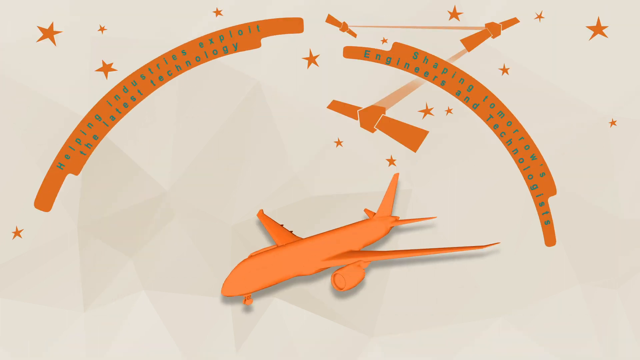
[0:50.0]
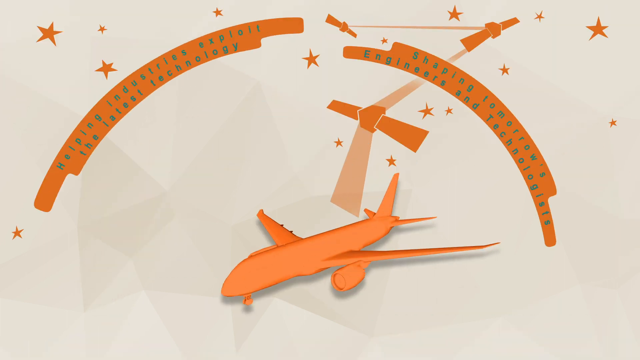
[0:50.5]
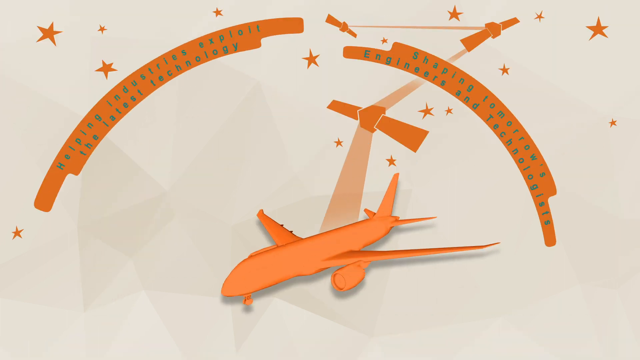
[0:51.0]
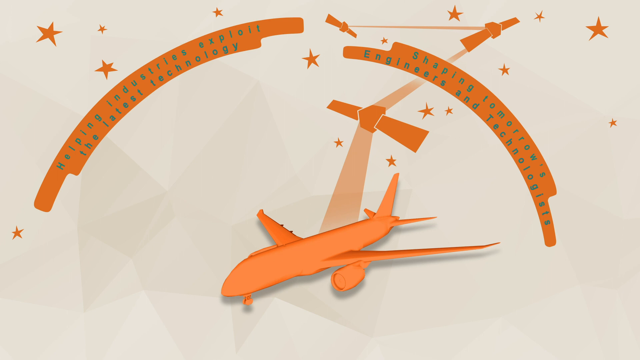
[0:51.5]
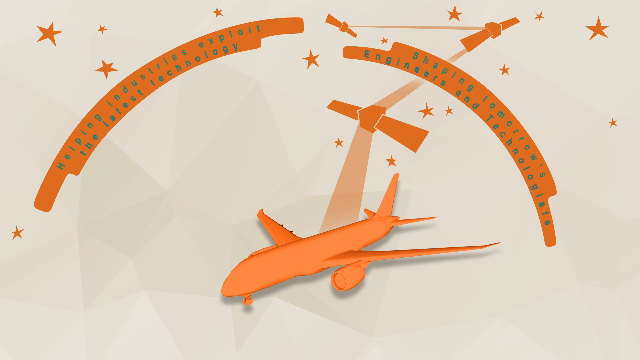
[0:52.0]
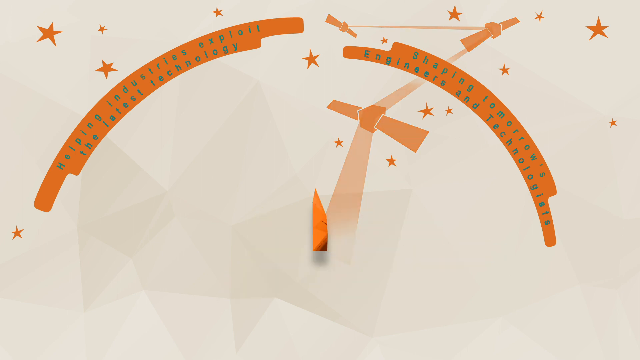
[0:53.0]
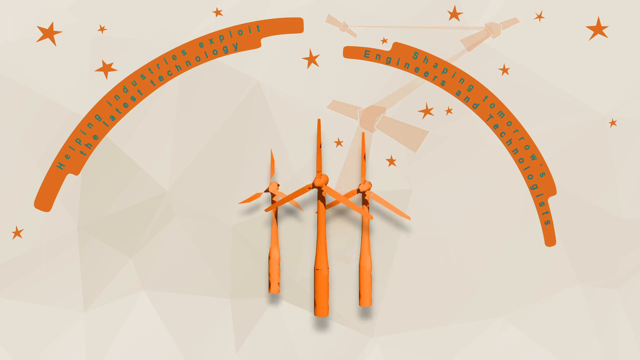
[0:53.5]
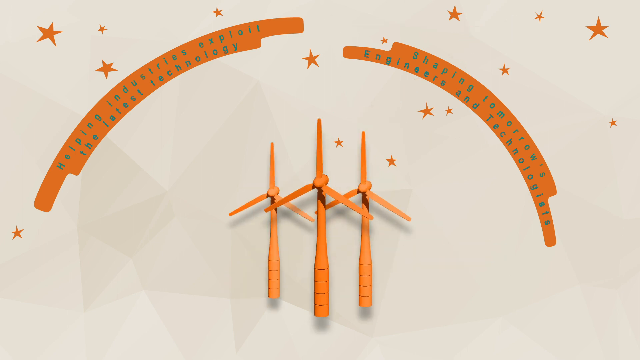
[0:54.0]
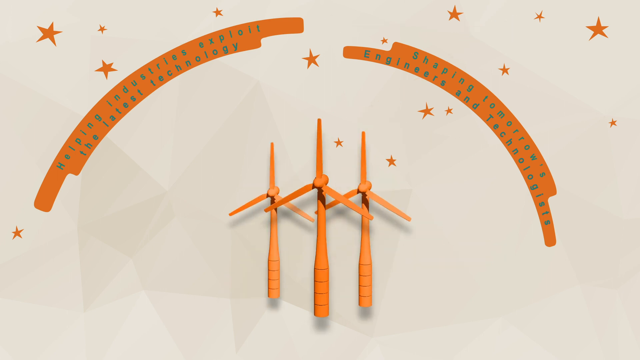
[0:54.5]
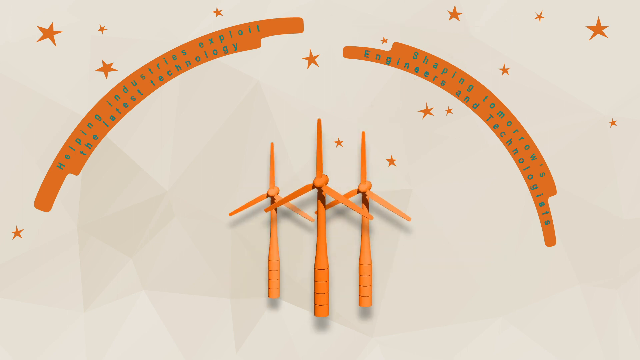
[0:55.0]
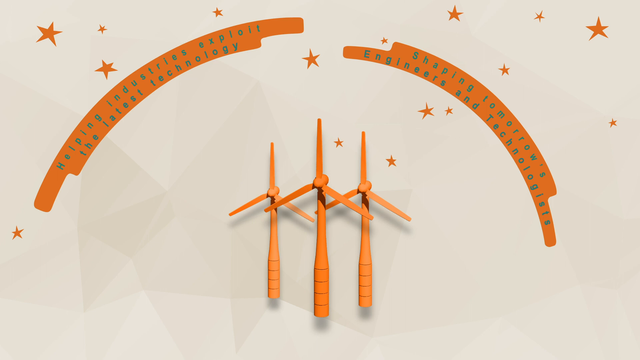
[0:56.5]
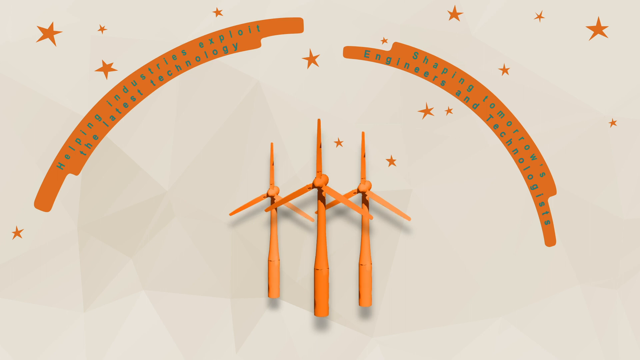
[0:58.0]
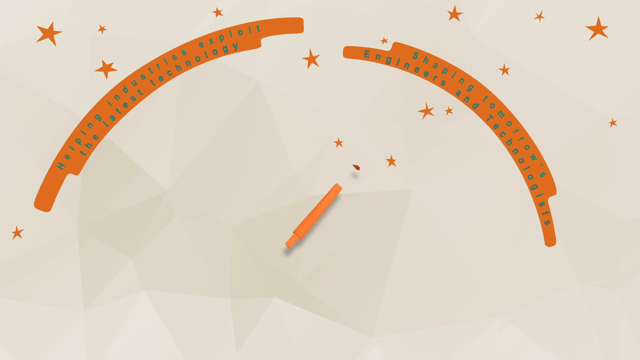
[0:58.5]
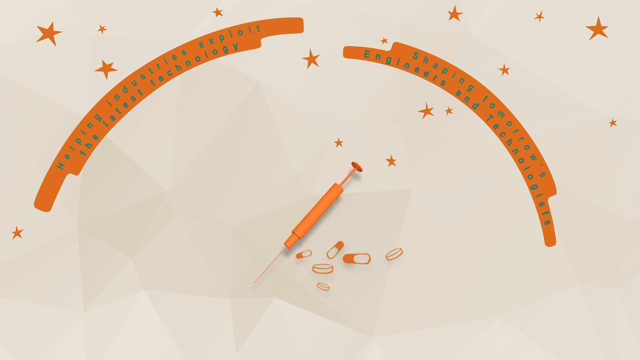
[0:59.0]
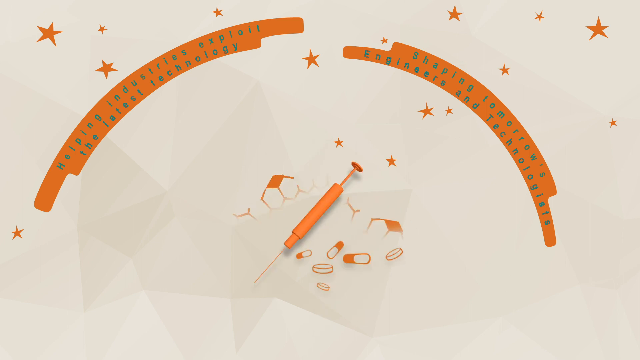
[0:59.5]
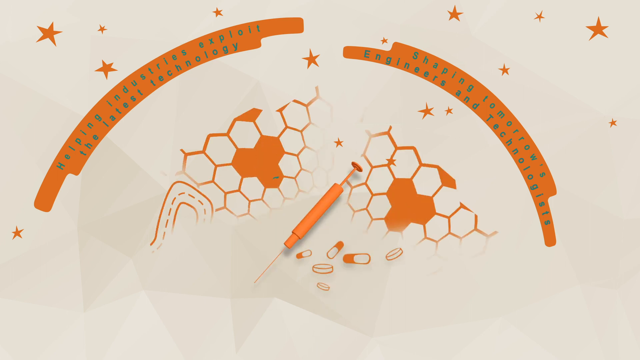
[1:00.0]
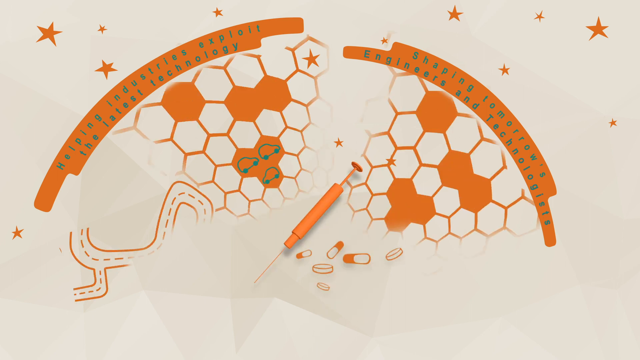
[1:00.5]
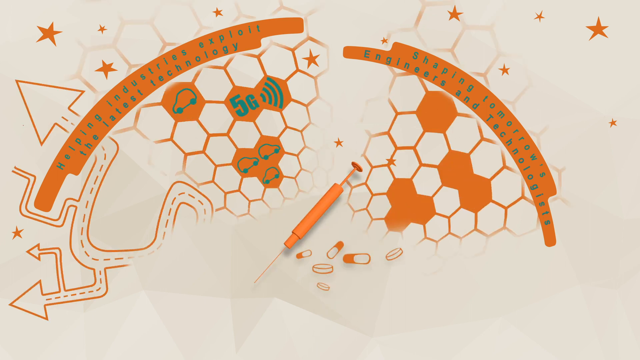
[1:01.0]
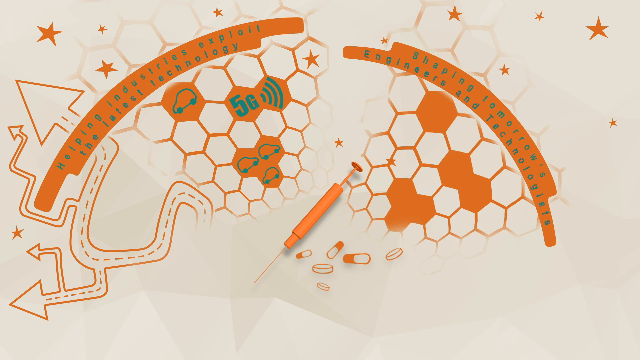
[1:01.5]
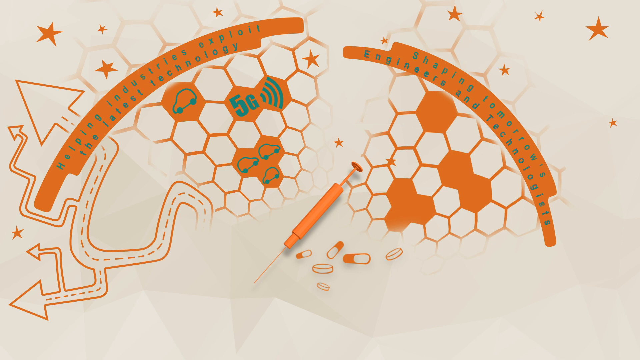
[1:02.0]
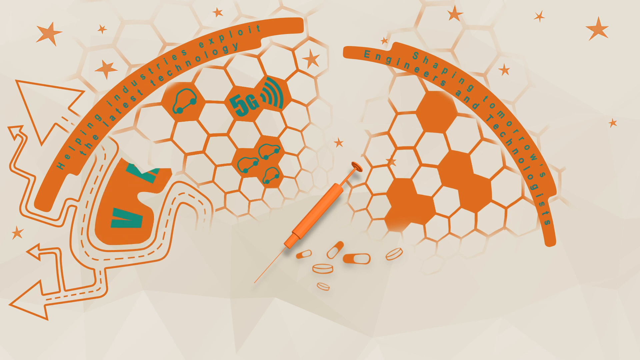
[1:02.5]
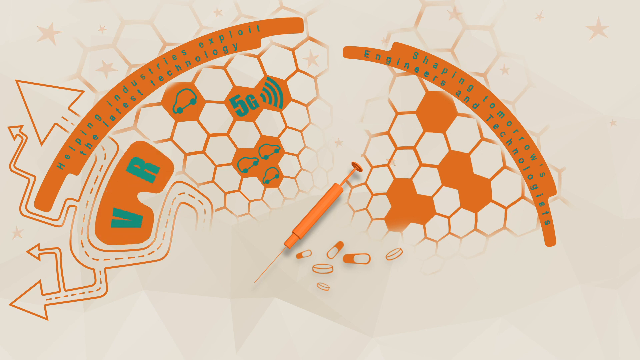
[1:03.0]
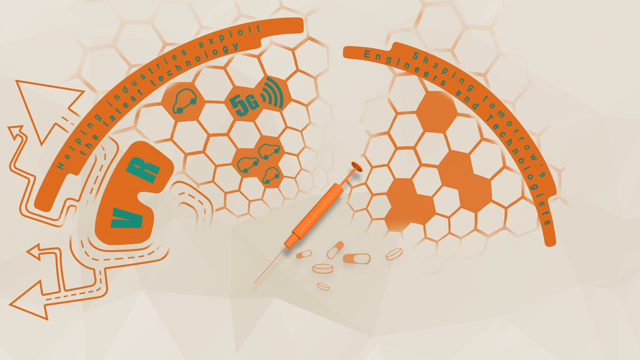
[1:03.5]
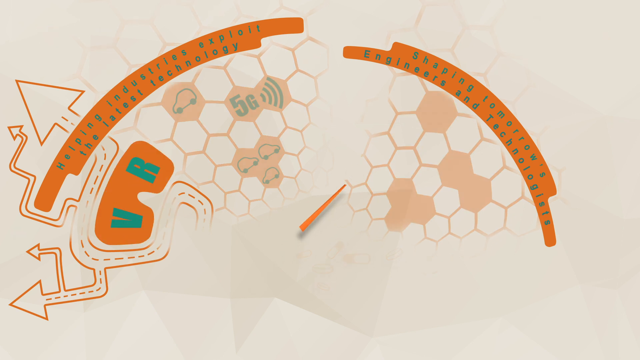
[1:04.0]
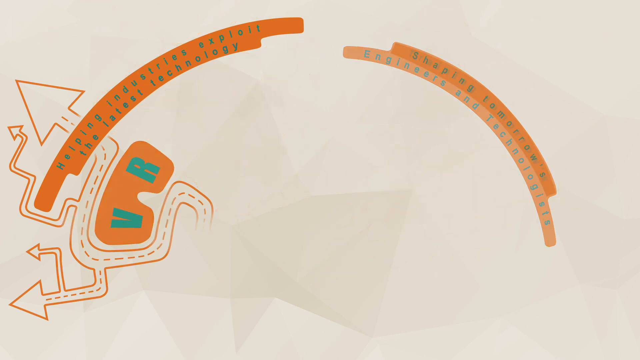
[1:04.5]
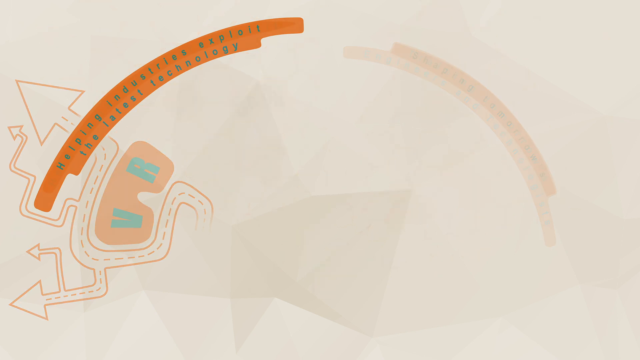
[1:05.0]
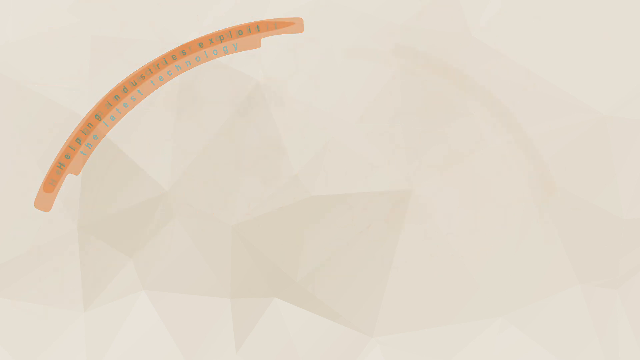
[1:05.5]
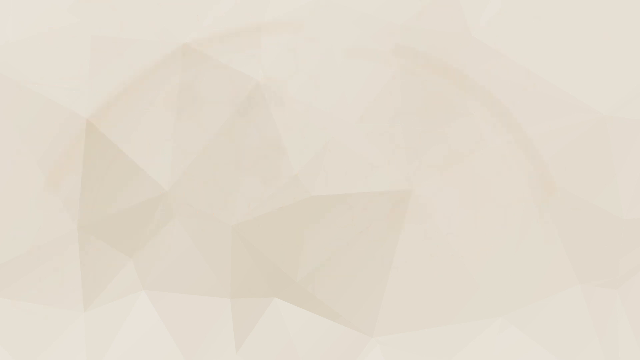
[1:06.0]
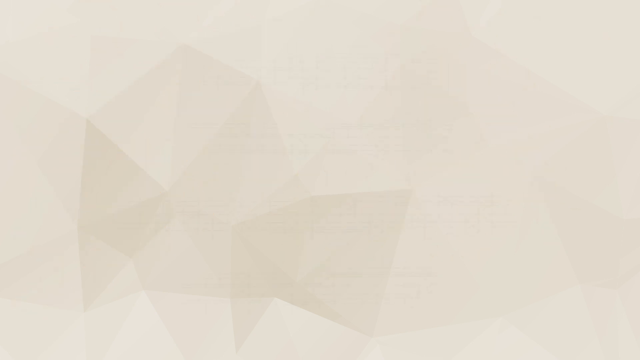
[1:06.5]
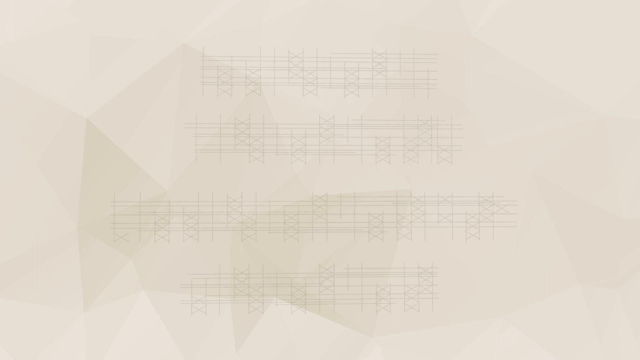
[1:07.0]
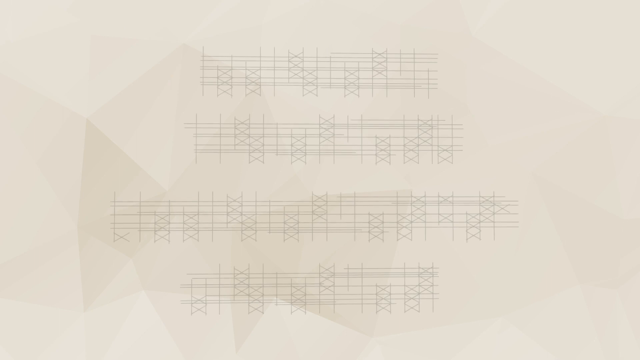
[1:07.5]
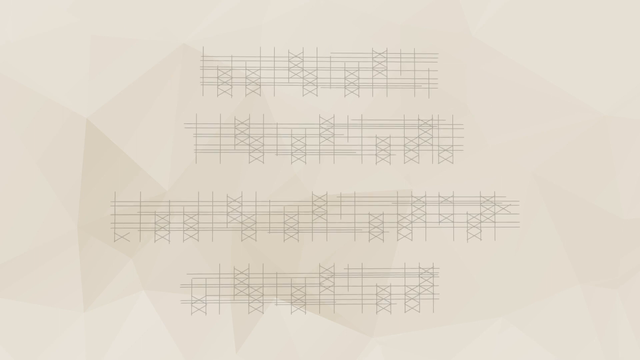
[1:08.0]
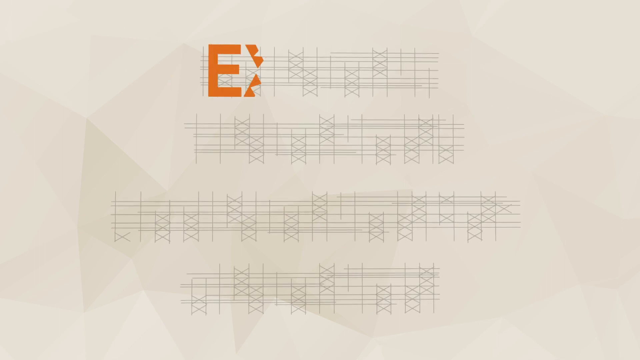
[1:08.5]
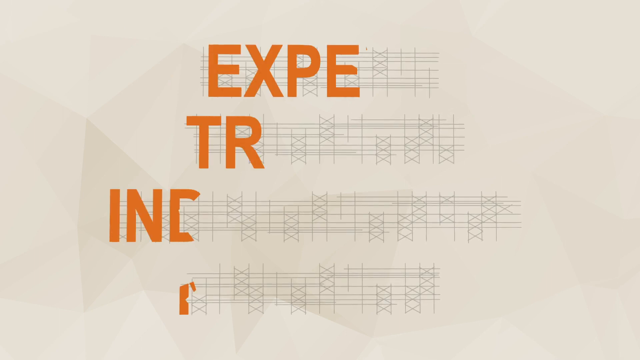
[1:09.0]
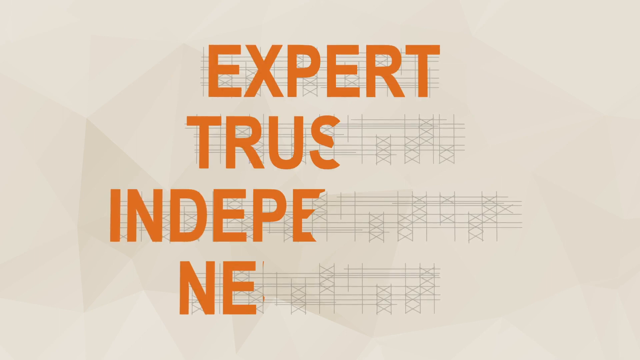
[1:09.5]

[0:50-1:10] More infographics cover helping industry exploit the internet and shaping engineering and technologies through the UKRI's collaborations and partnerships with academics, industry and government. The images are orange on a beige background, and the font is somewhat hard to read because of the colour scheme. There are images of a plane, a satellite, wind turbines, stars, syringes, the internet, VR, technology and cars.